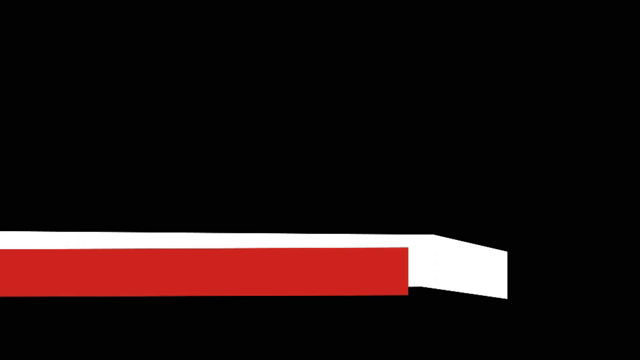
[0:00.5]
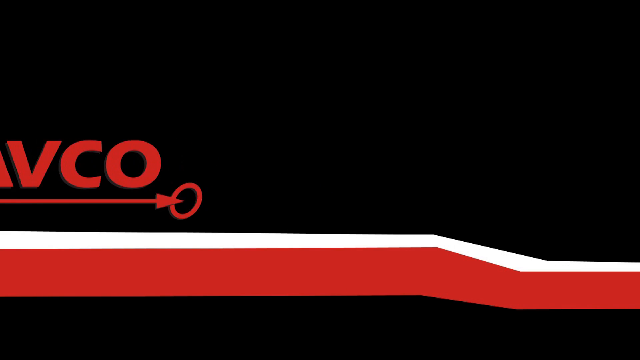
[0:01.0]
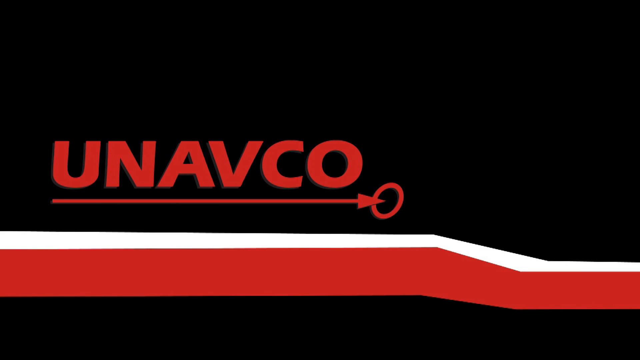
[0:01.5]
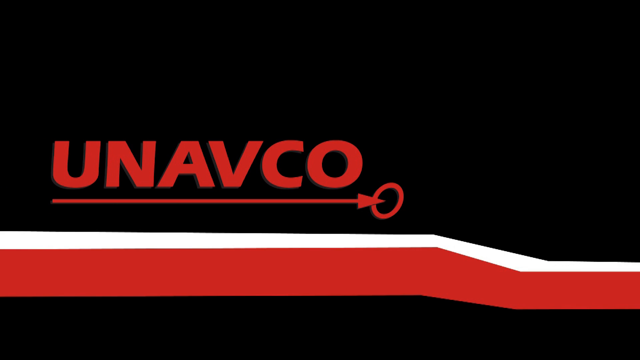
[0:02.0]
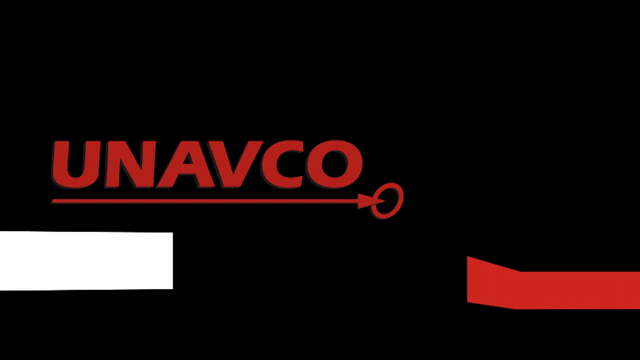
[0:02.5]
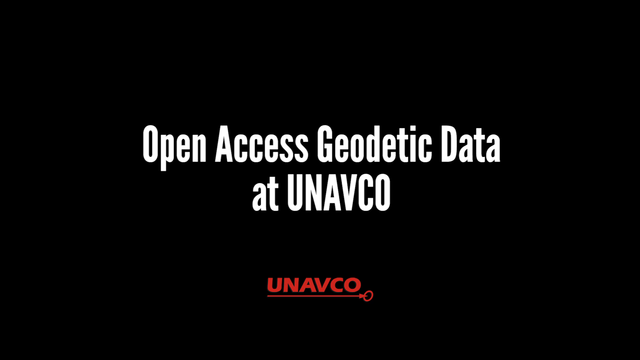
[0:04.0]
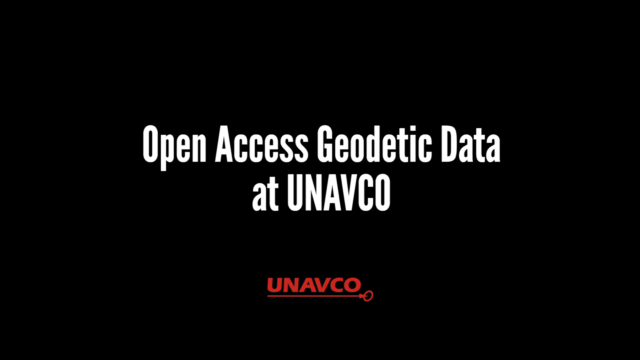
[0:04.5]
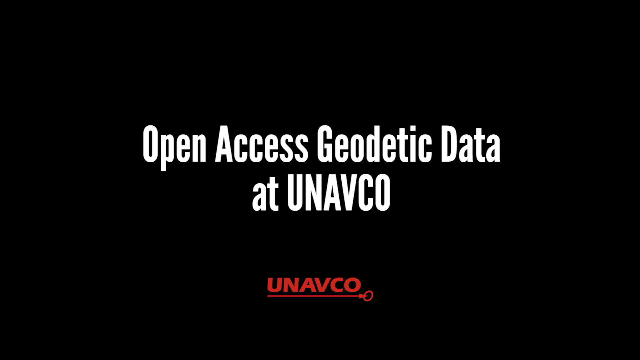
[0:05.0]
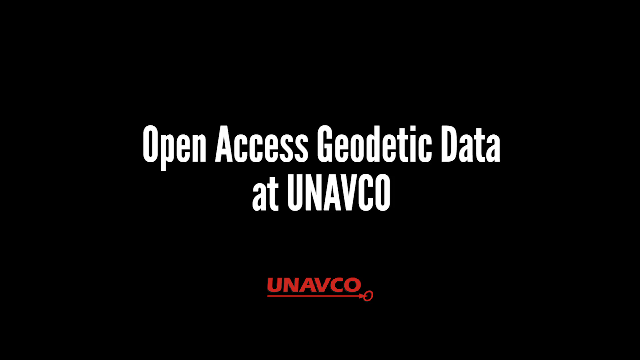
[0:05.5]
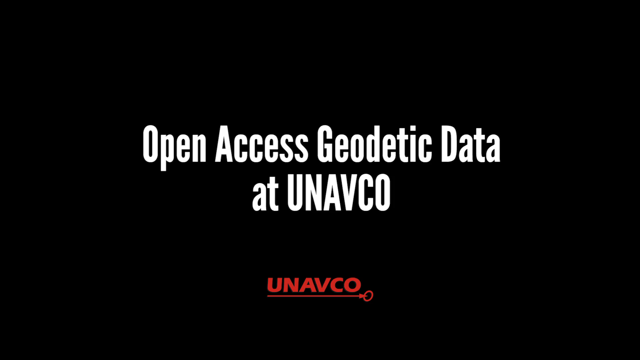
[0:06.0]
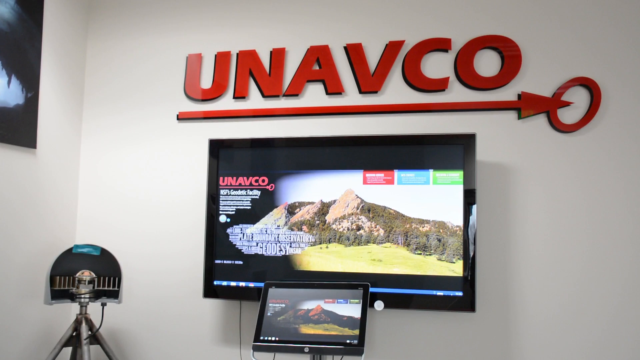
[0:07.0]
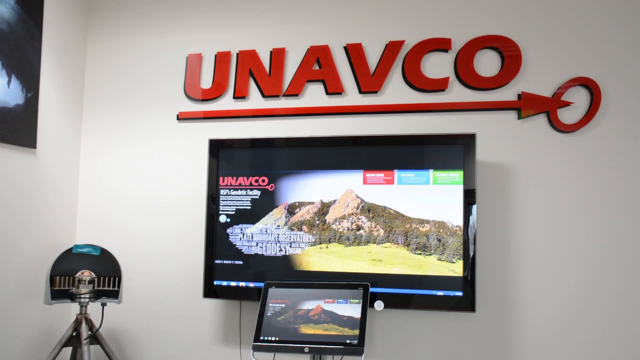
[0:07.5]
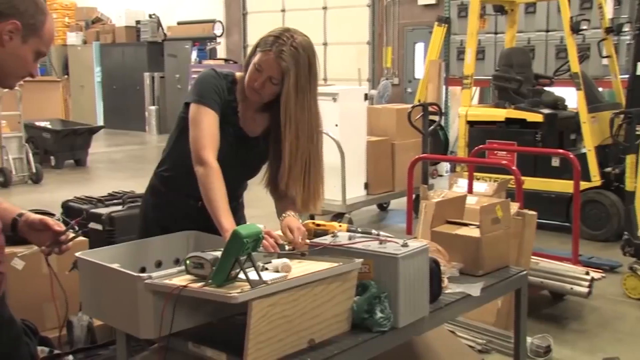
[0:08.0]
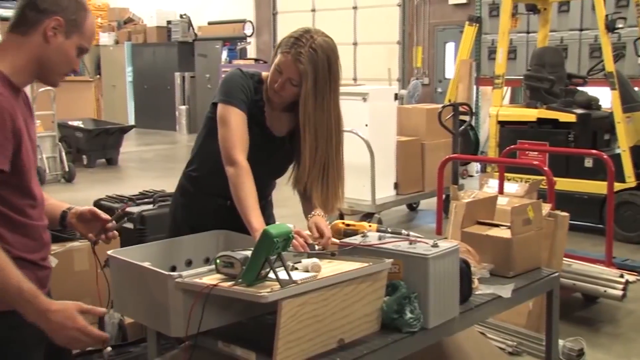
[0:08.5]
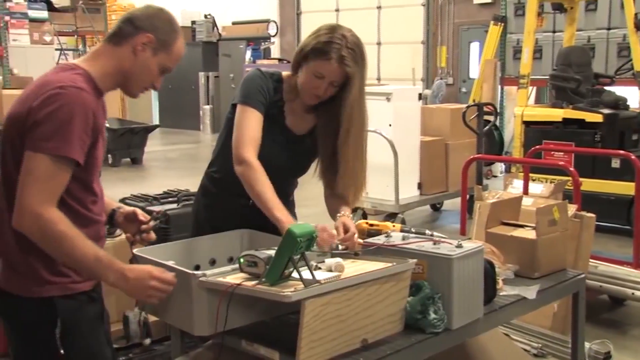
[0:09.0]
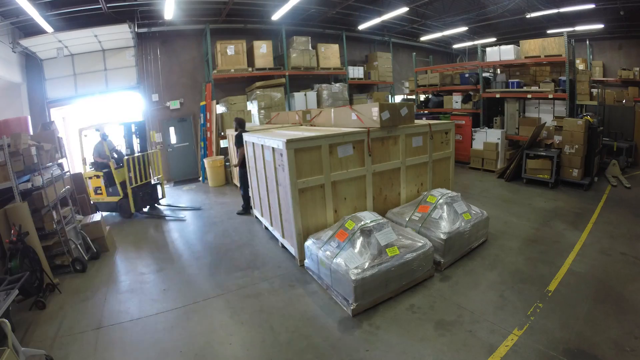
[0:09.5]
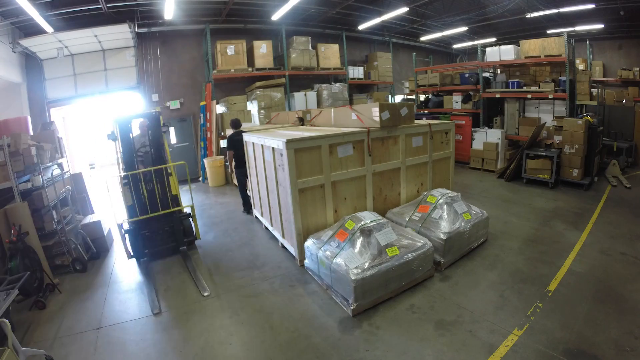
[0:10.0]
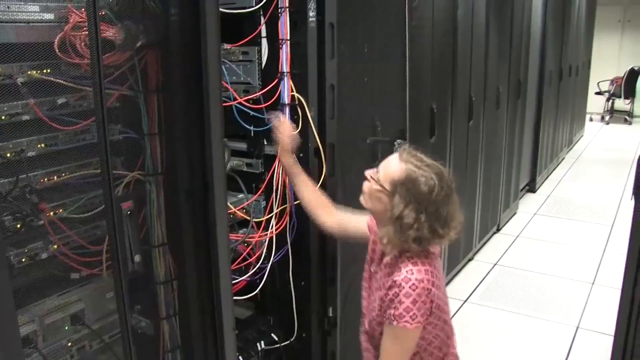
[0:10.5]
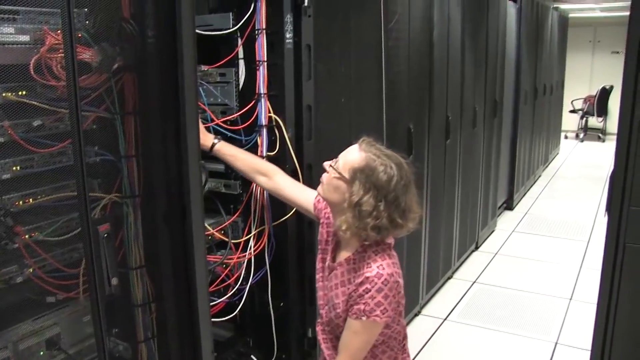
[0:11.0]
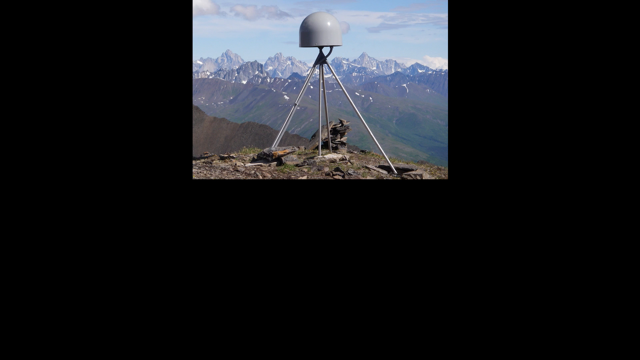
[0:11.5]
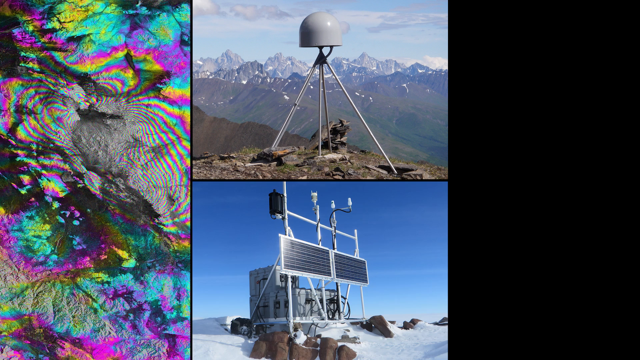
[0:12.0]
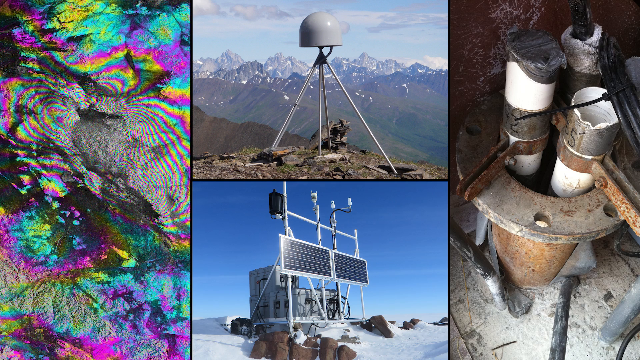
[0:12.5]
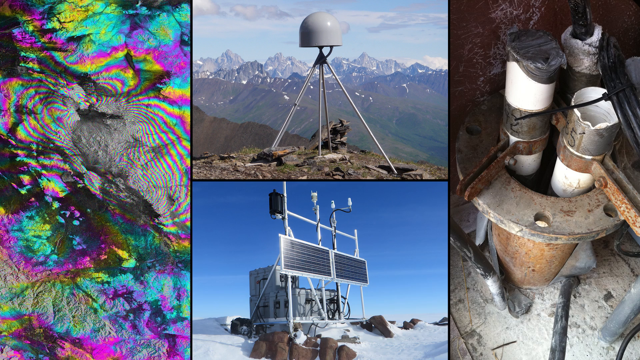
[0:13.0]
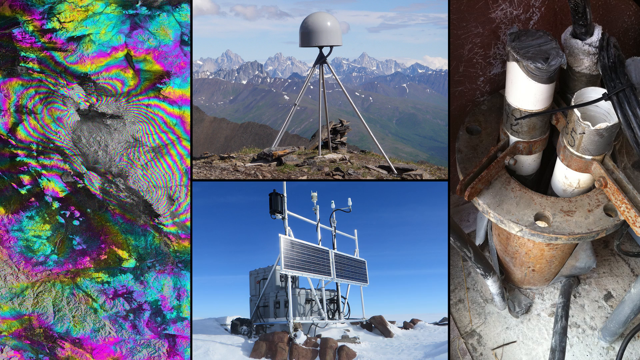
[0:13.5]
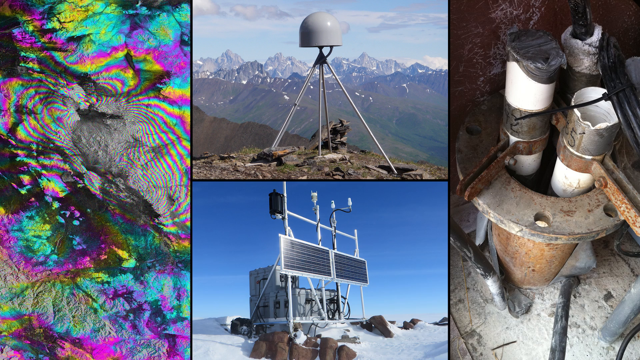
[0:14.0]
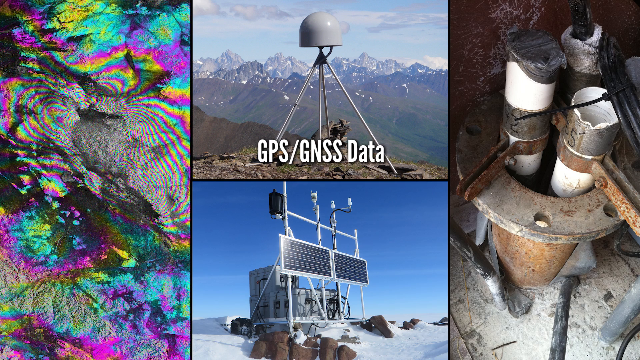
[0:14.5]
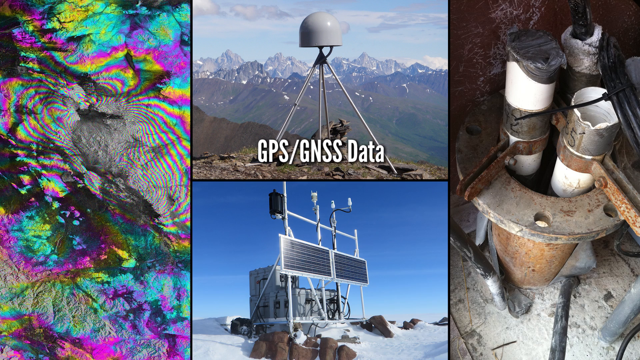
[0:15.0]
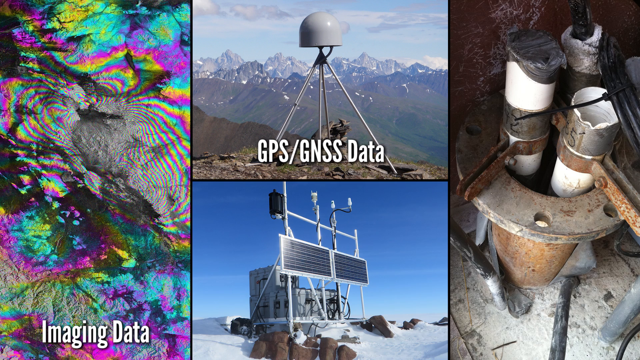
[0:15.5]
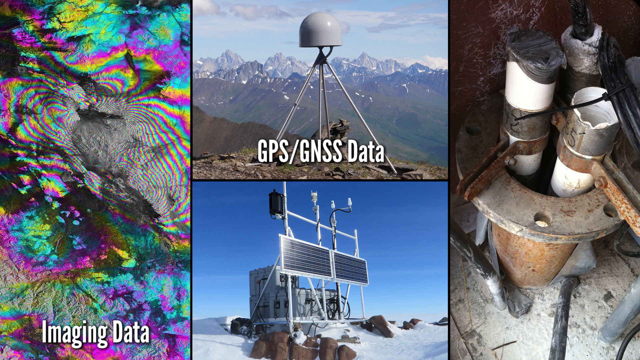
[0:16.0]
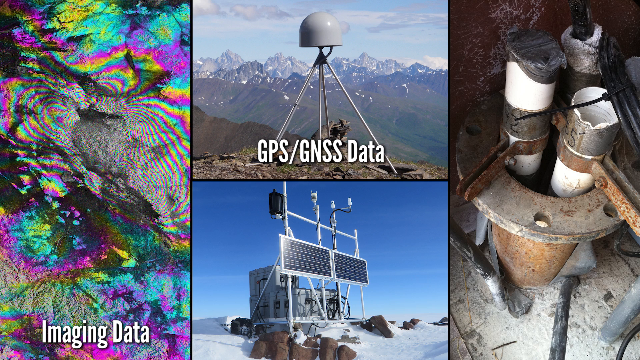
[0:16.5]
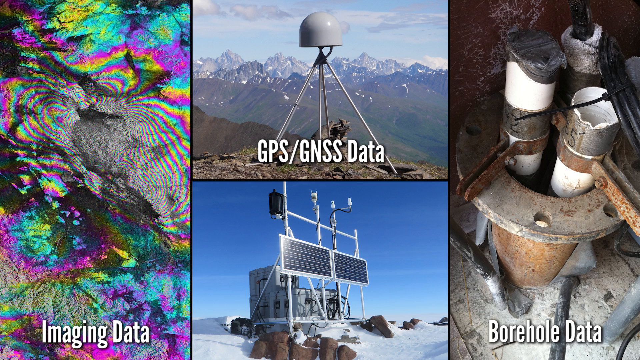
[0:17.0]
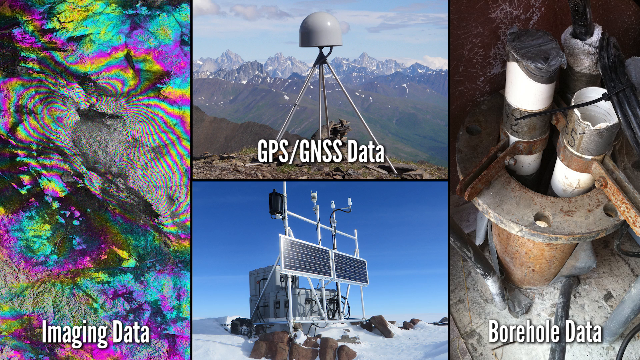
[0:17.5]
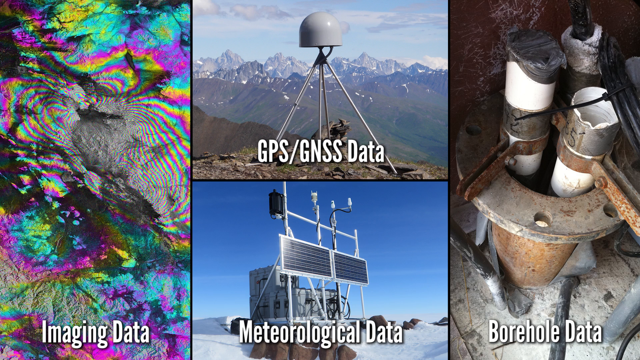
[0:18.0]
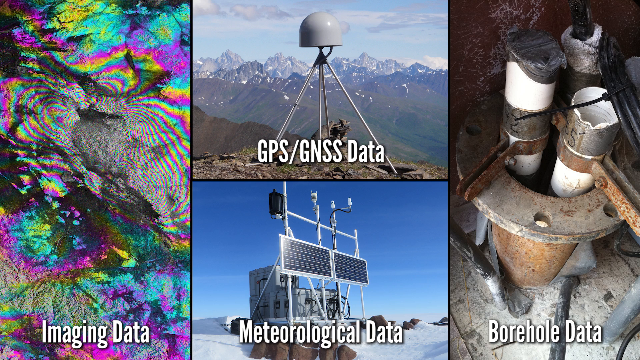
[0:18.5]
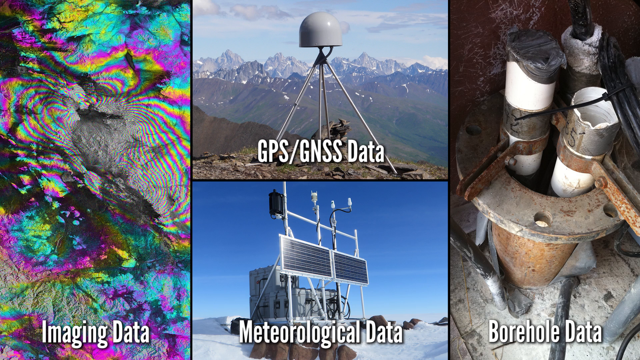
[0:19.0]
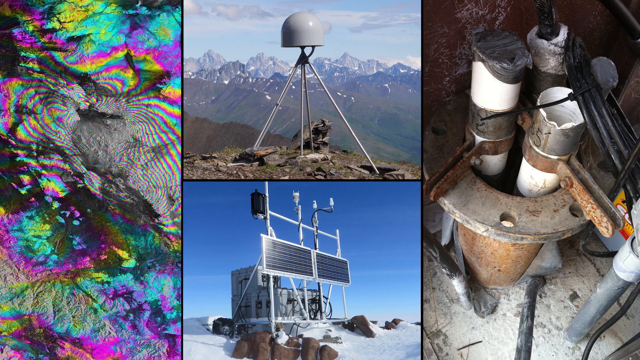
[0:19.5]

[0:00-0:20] The video is put out by UNIVACO and opens with "Open access geodetic data at UNIVACO." The headquarters of UNIVACO appears, followed by a monitor showing UNIVACO, with what looks like a hillside, maybe a country hillside with trees, in the background. People work in the warehouse part, some with a forklift, and a person opens a panel that has wires. A mountaintop satellite appears, then another, different type of satellite, and on the far right-hand side what appears to be some type of unidentified steel device with tubes that almost look like PVC pipe. Then GPS and then GNSS data appear.